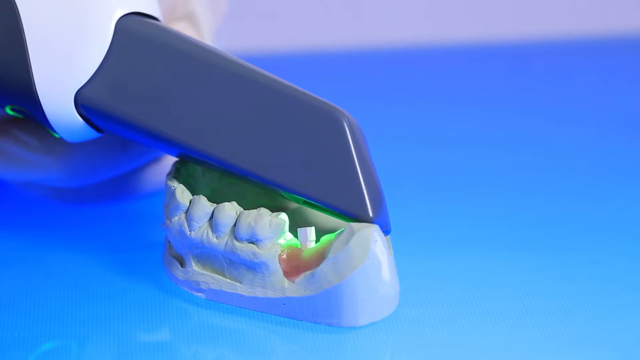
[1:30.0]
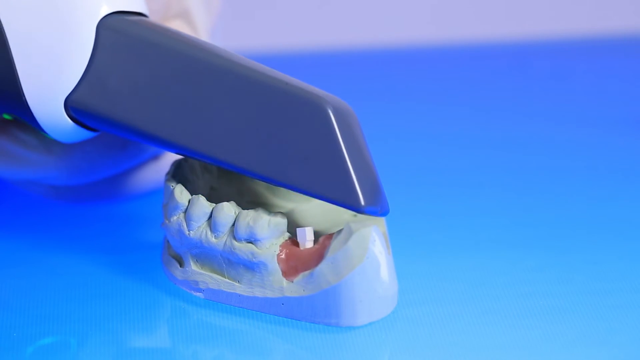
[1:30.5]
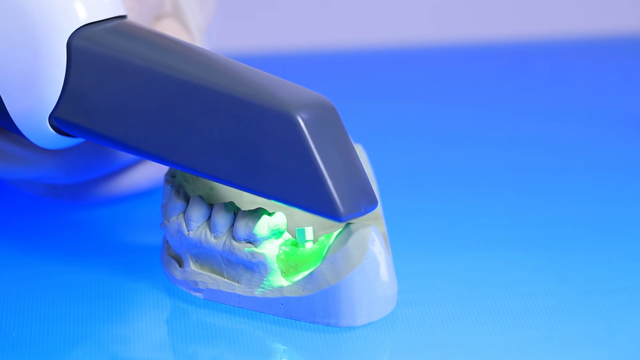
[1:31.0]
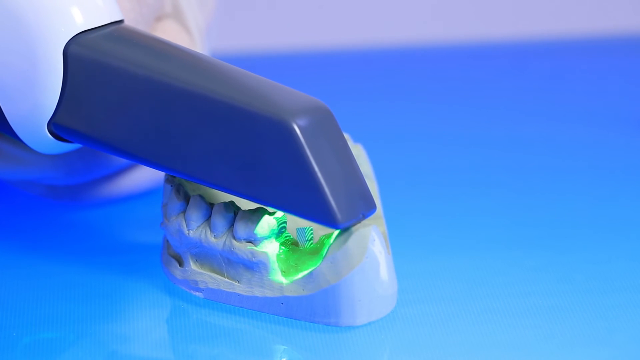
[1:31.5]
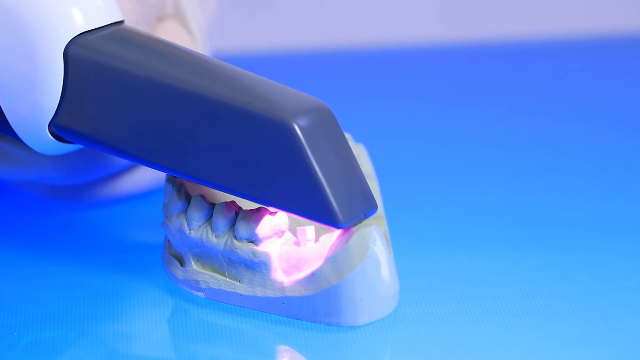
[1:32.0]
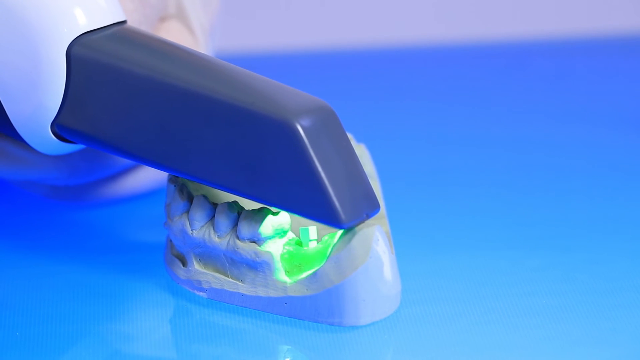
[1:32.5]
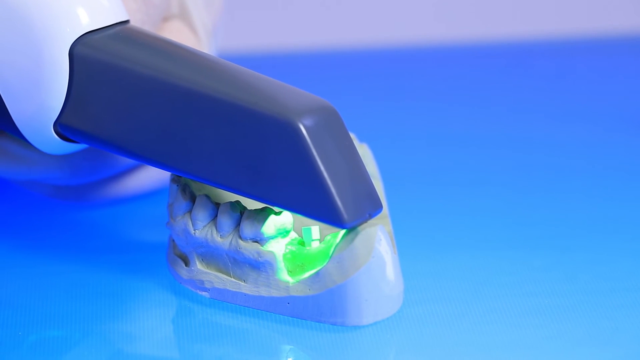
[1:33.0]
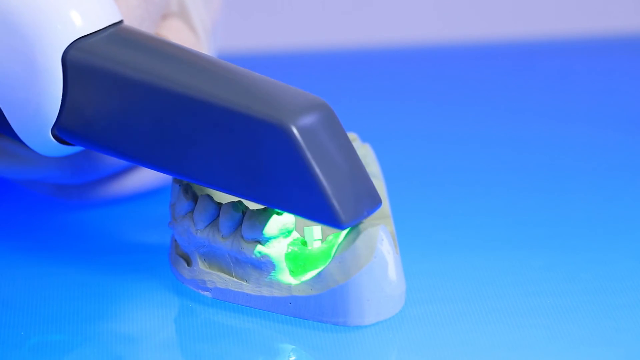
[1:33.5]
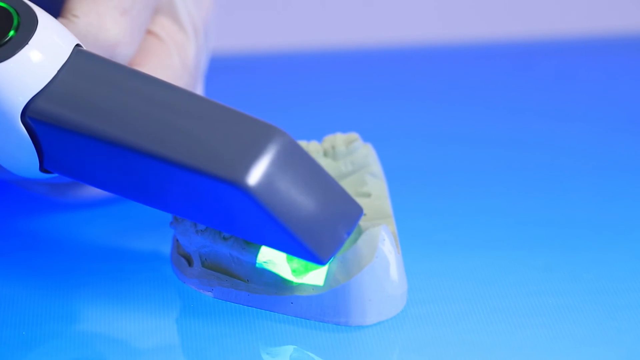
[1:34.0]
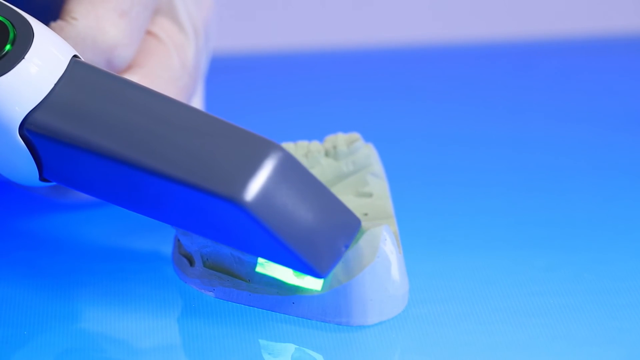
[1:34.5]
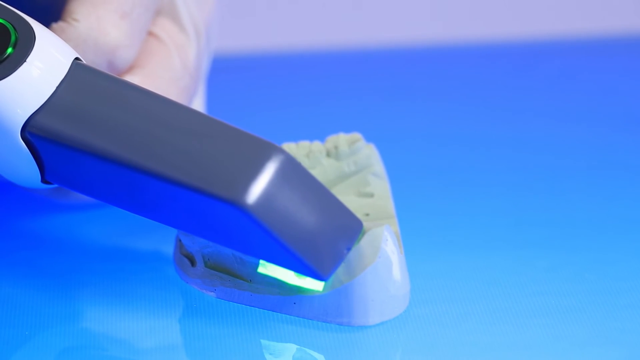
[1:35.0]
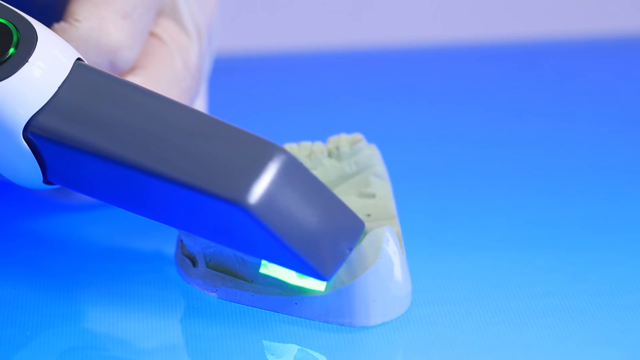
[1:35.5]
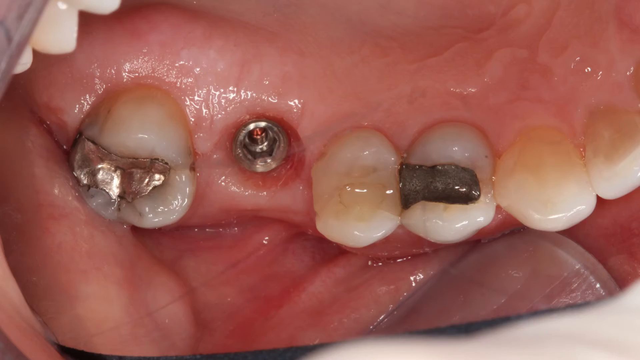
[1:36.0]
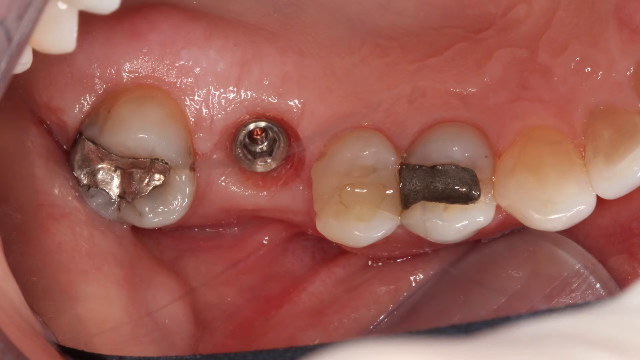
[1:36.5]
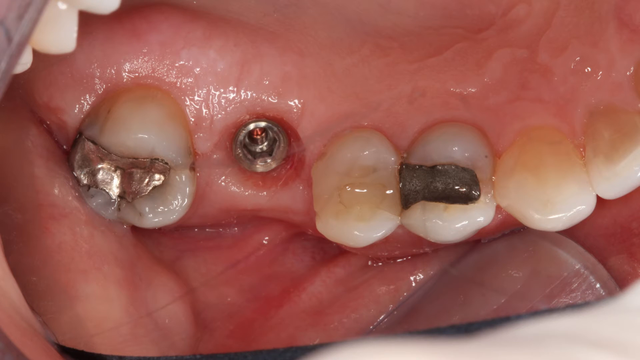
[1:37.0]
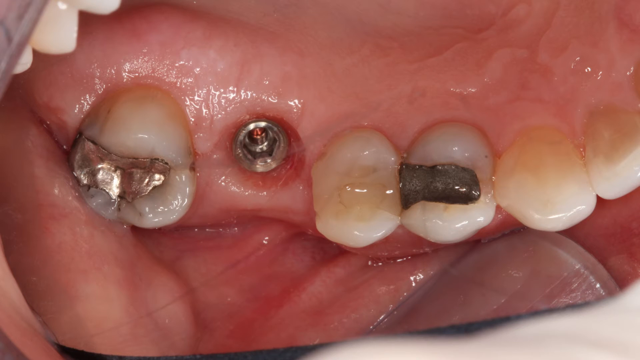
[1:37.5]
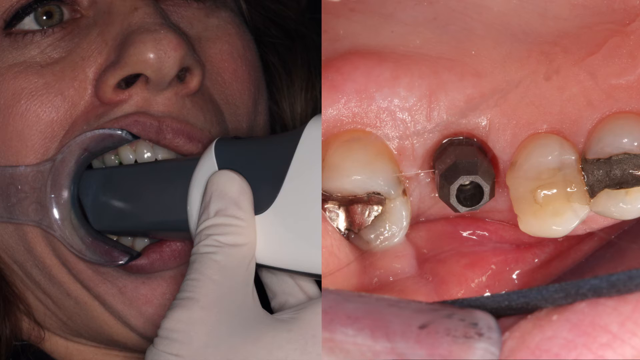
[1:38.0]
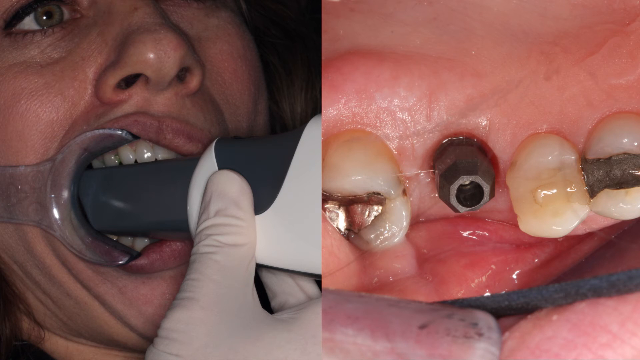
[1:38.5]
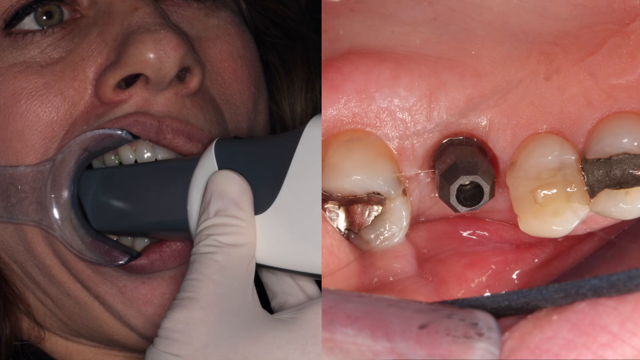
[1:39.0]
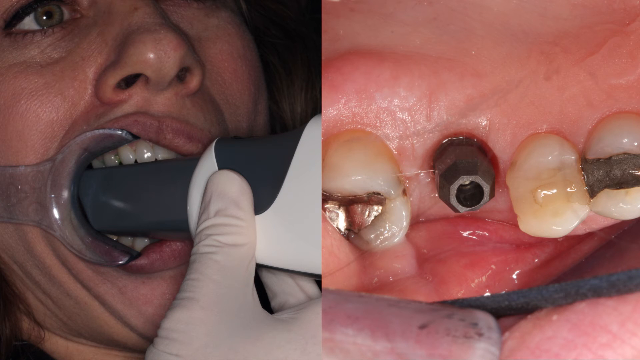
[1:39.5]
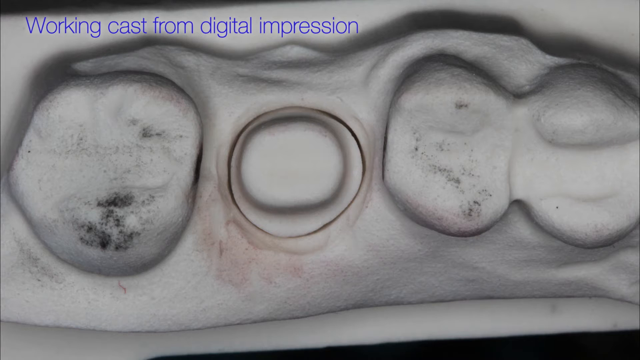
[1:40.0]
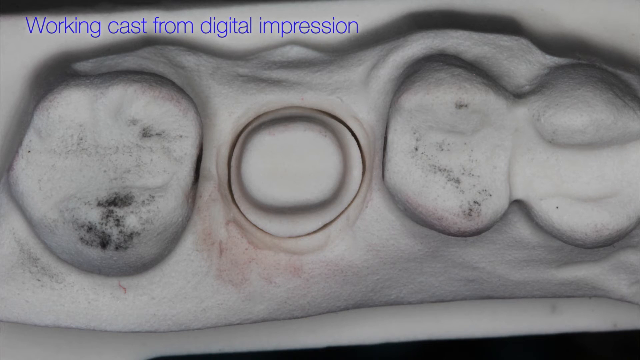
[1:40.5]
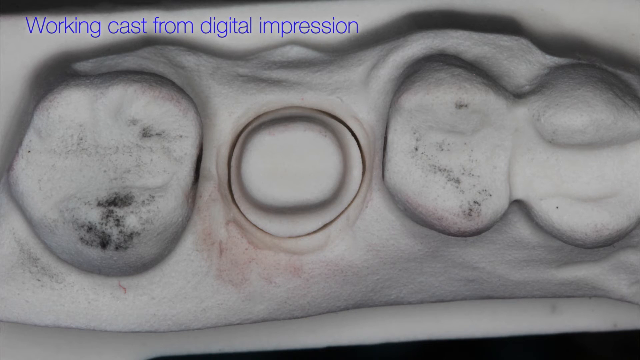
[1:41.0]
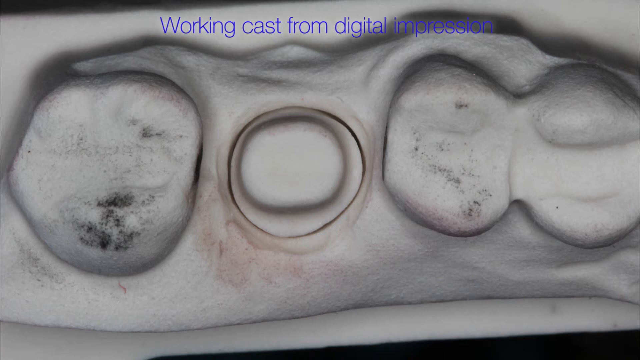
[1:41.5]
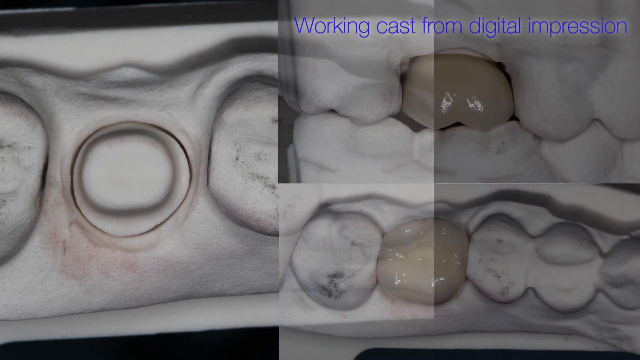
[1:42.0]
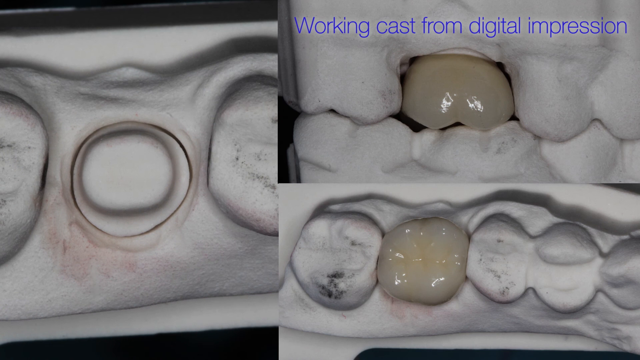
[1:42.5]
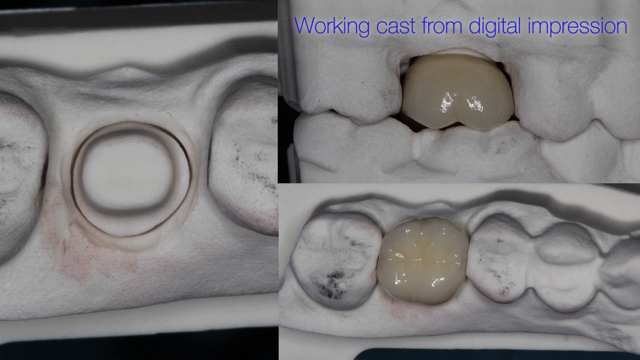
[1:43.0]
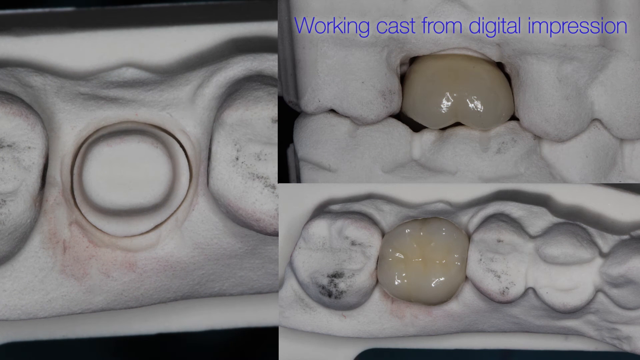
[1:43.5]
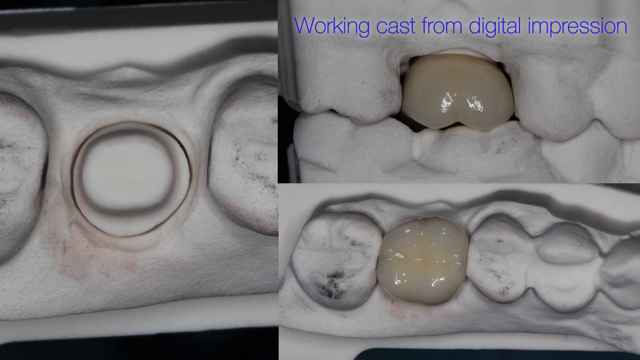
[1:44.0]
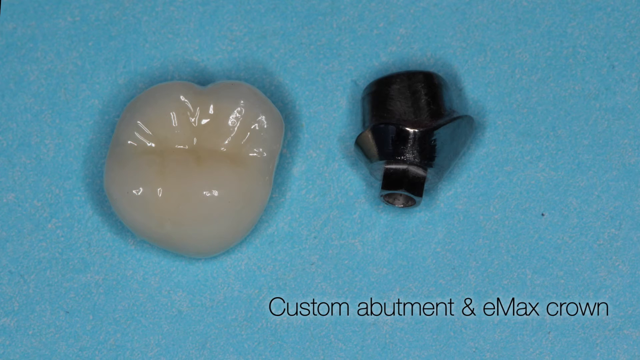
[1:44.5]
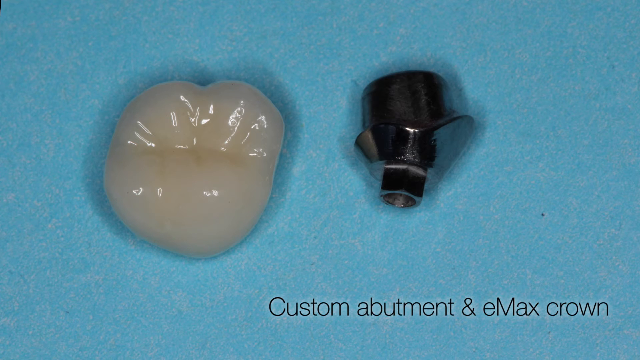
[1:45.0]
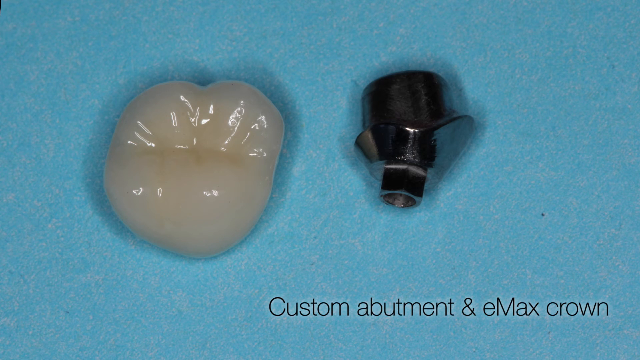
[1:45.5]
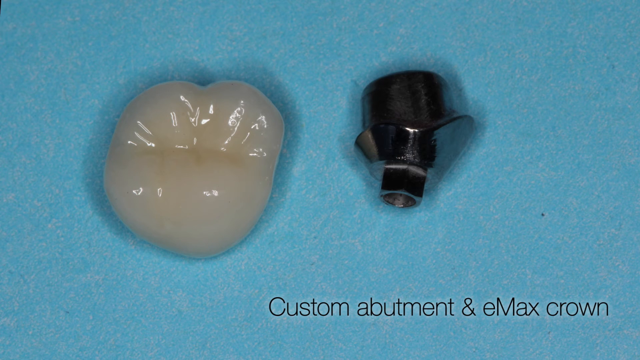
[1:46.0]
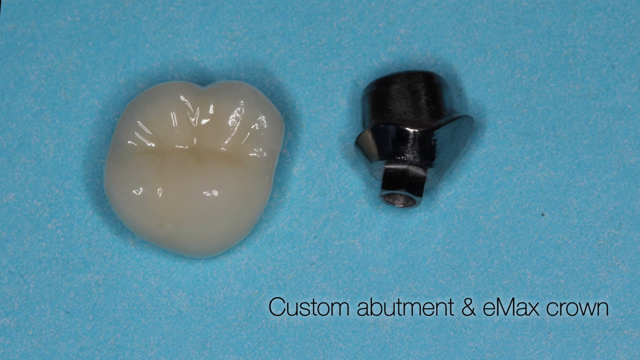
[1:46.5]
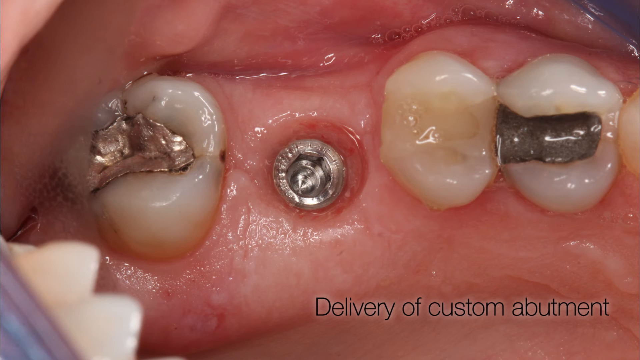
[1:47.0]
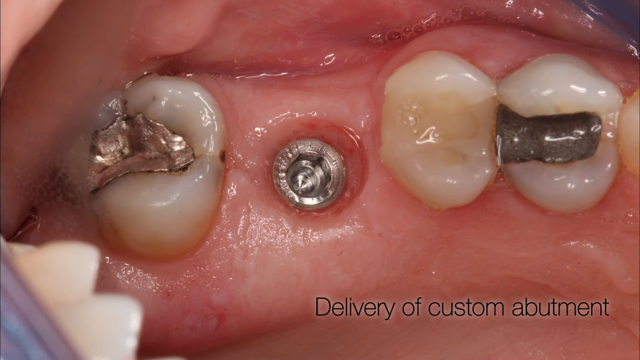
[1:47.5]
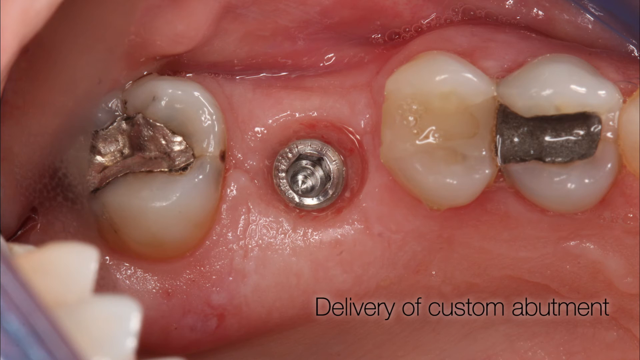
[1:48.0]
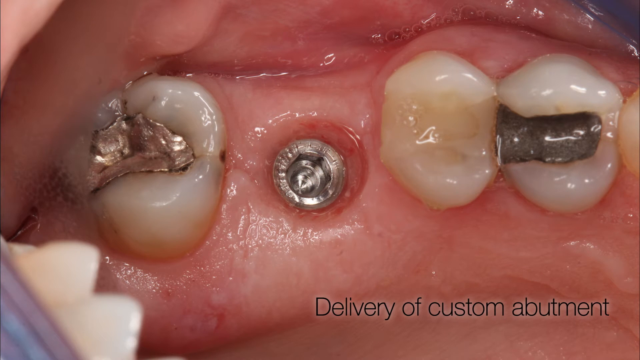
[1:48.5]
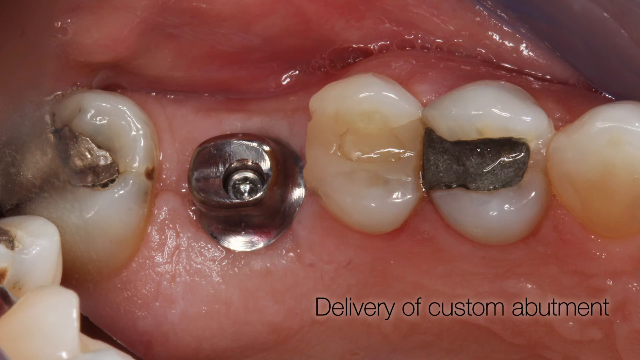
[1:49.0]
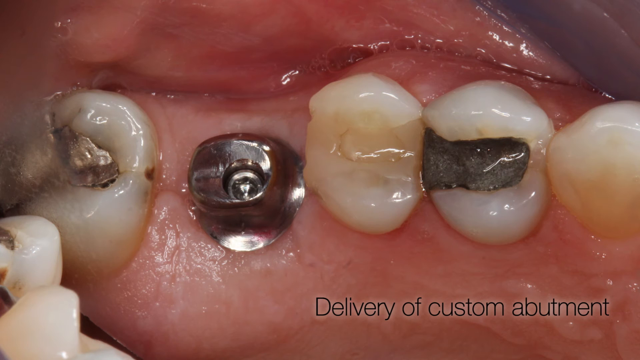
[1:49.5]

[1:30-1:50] The device, which has a gray top emitting blue light, is used on a mold of teeth, scanning every side of the area on the back side of the teeth where a white screw was applied. The video cuts to an image of what looks to be the inside of people's mouths, with screws applied in the areas where teeth are missing. A 3D animation of teeth appears with the text "working cast from digital impression", showing different tooth areas. It cuts to a tooth and a metal screw with the text "custom abutment and emax crown", then to more teeth showing the crown on a tooth and the custom abutment in the missing-tooth area, with the text "delivery of custom abutment".